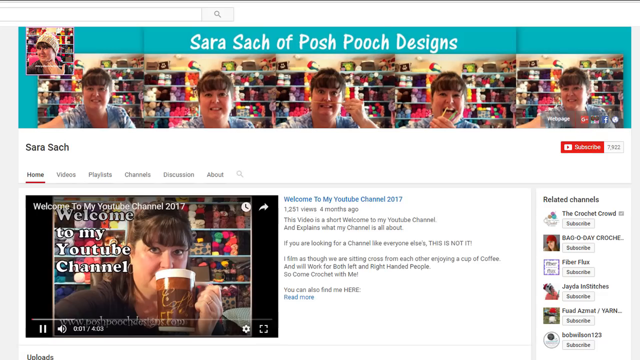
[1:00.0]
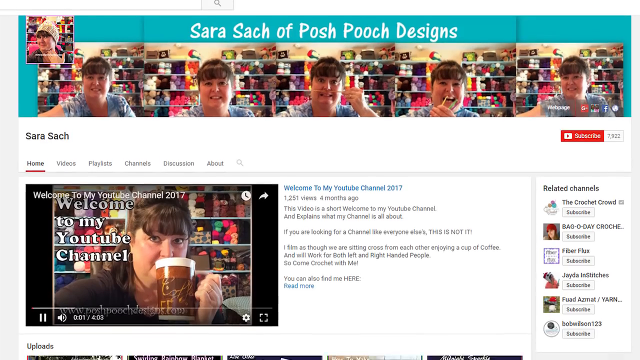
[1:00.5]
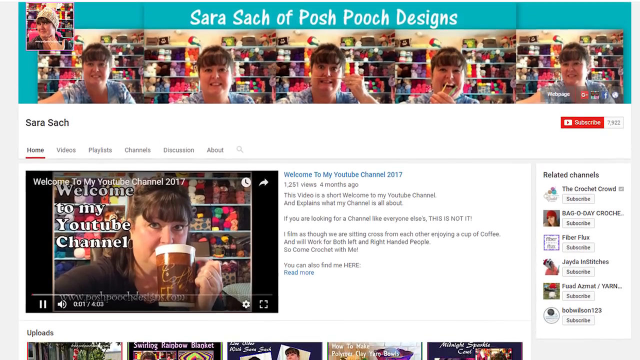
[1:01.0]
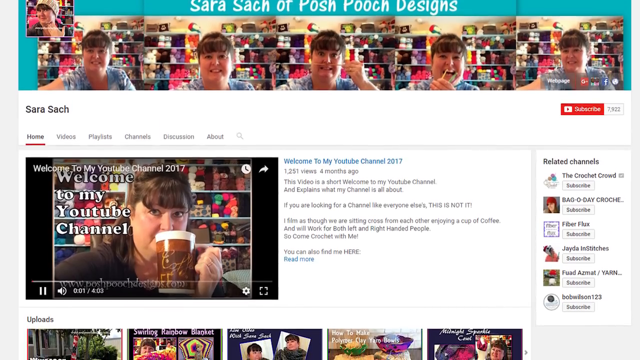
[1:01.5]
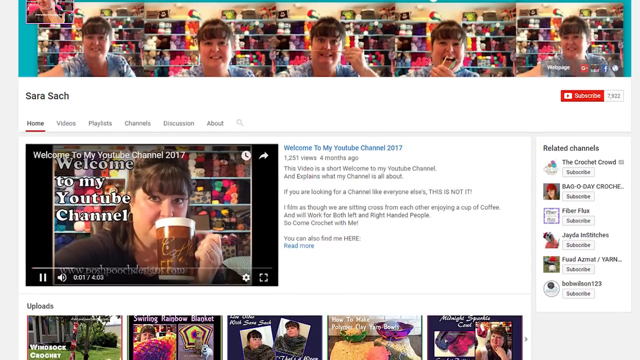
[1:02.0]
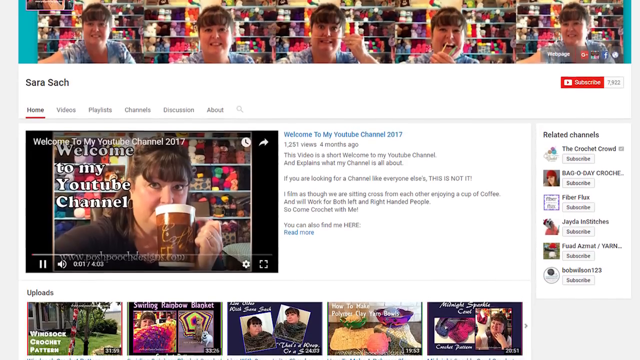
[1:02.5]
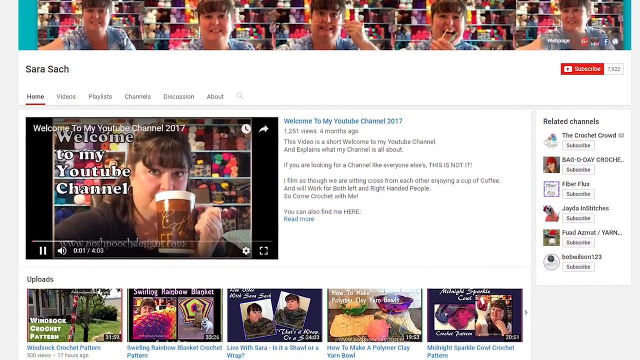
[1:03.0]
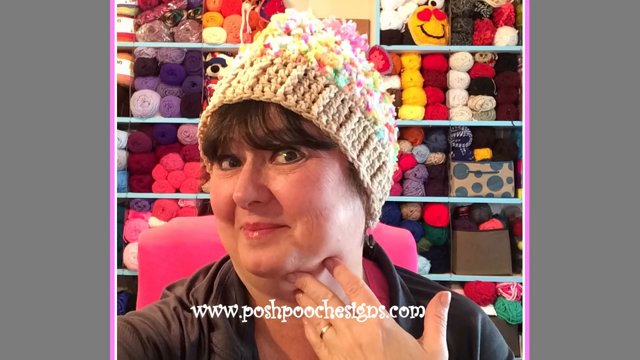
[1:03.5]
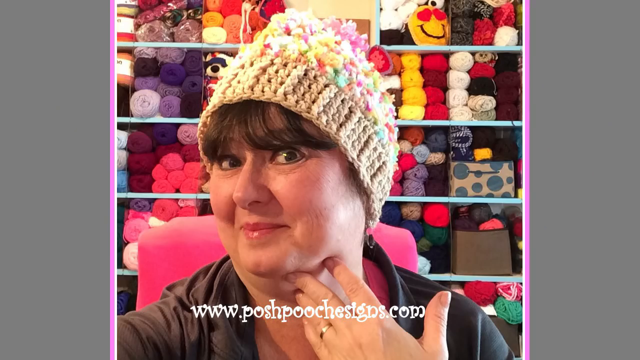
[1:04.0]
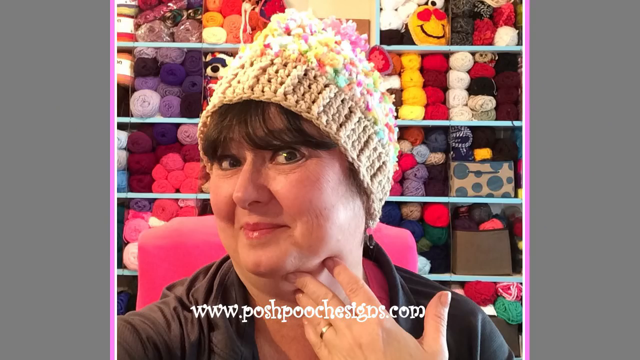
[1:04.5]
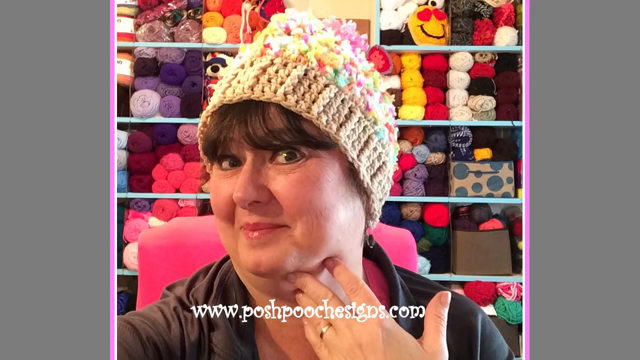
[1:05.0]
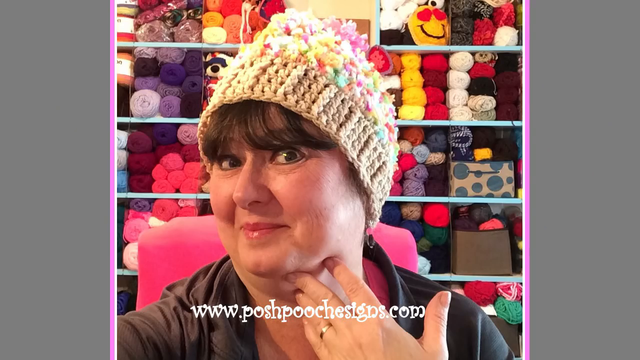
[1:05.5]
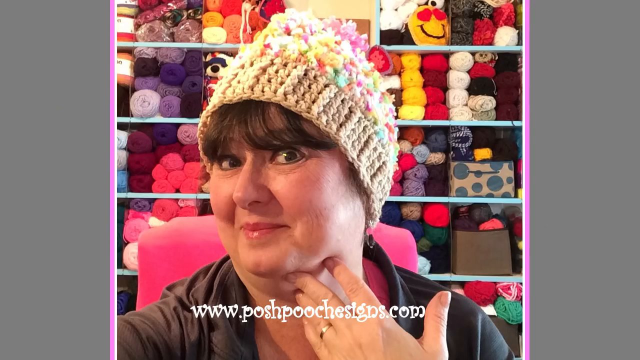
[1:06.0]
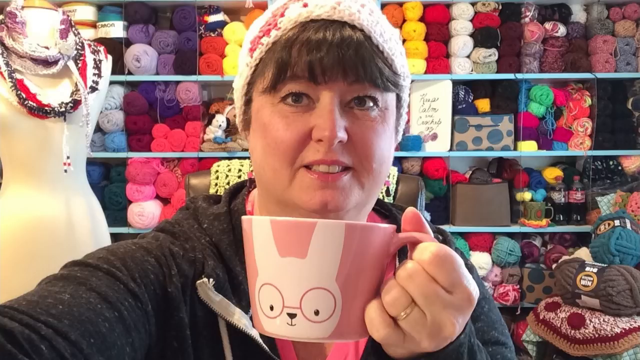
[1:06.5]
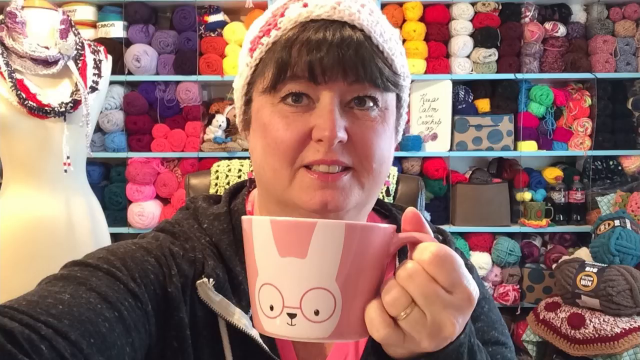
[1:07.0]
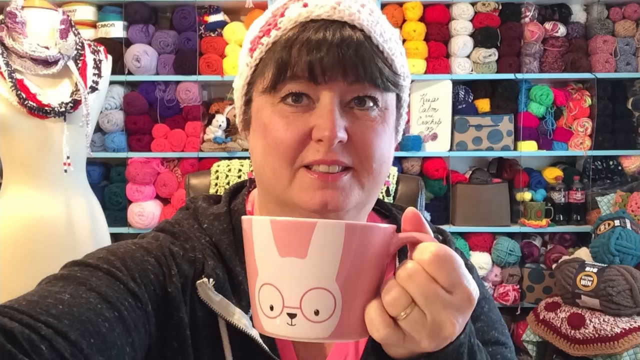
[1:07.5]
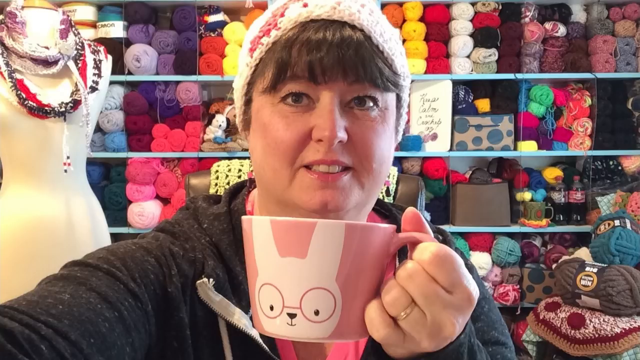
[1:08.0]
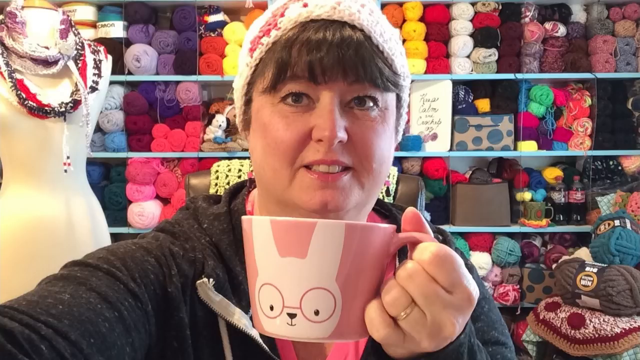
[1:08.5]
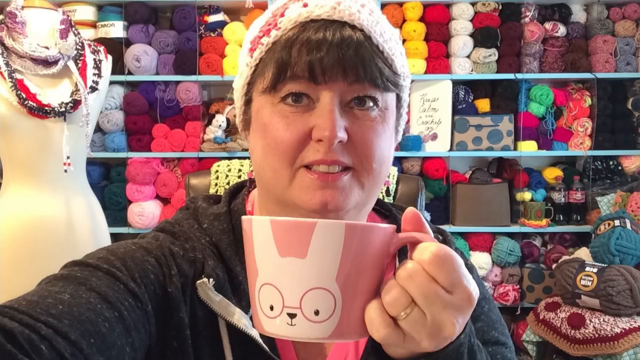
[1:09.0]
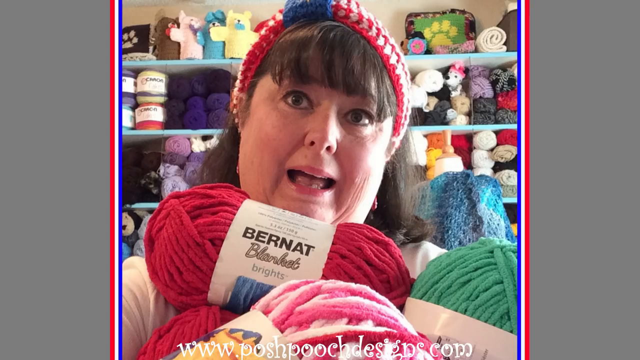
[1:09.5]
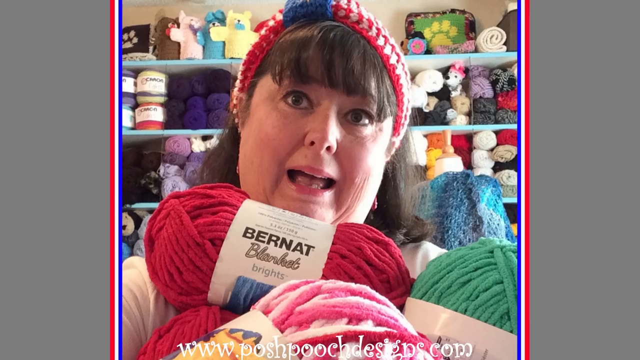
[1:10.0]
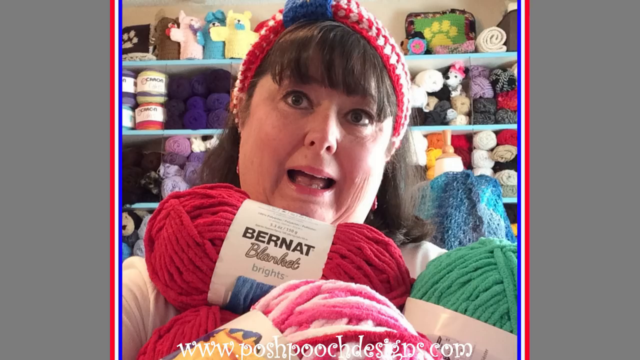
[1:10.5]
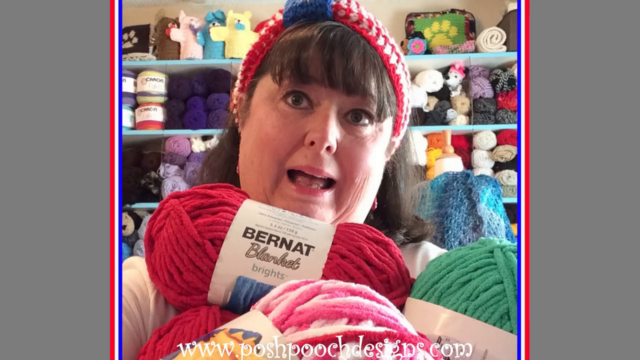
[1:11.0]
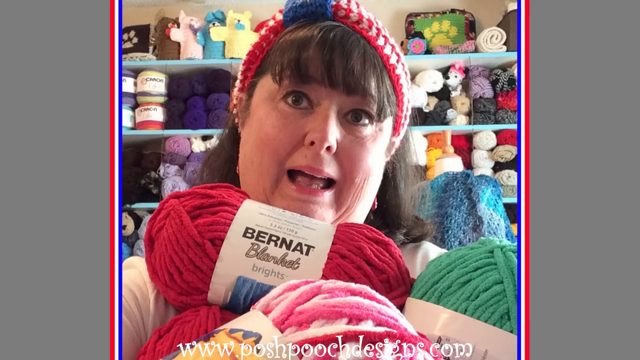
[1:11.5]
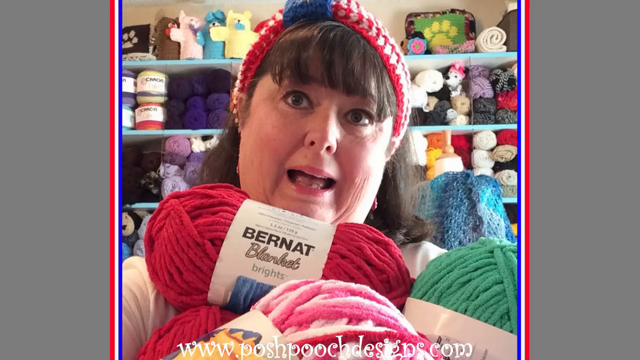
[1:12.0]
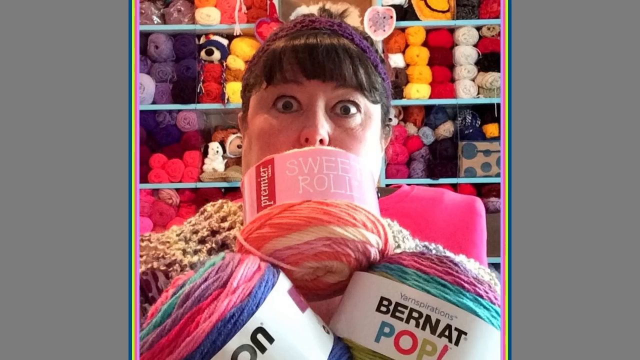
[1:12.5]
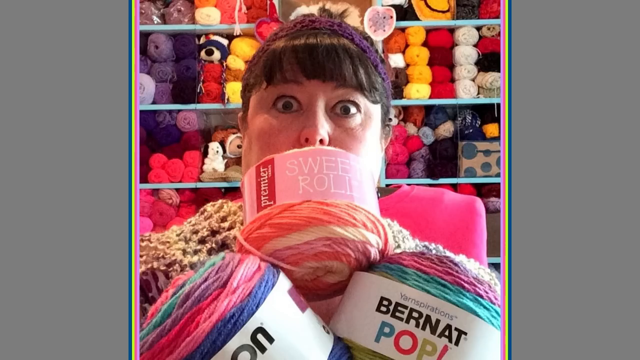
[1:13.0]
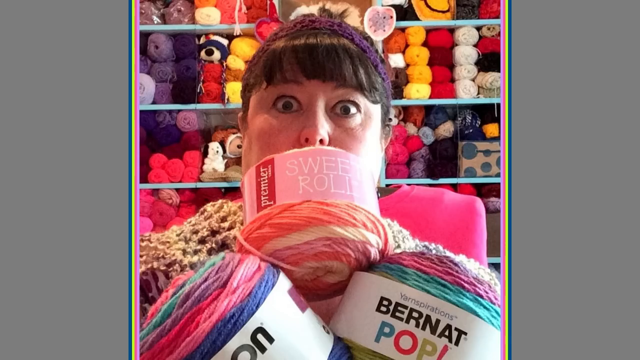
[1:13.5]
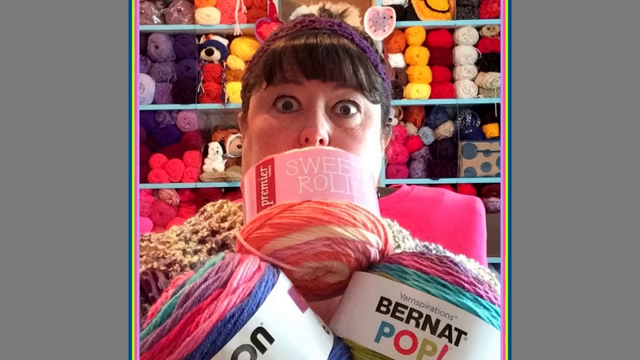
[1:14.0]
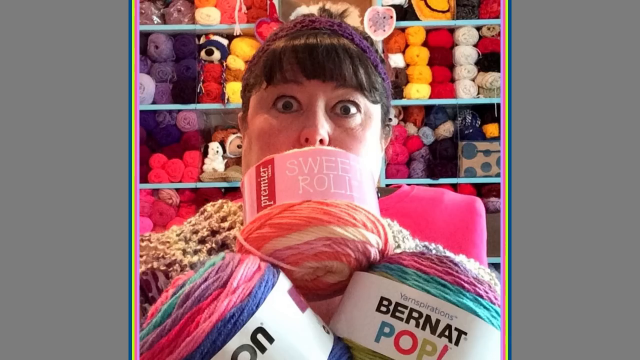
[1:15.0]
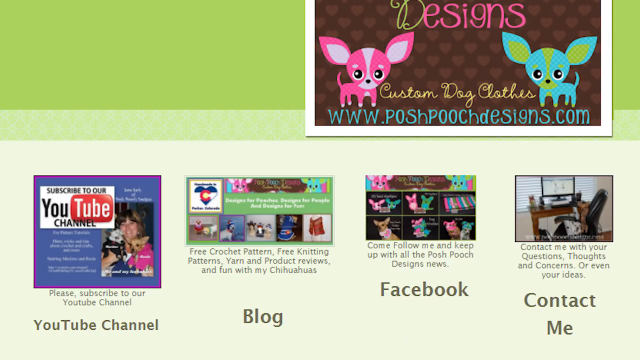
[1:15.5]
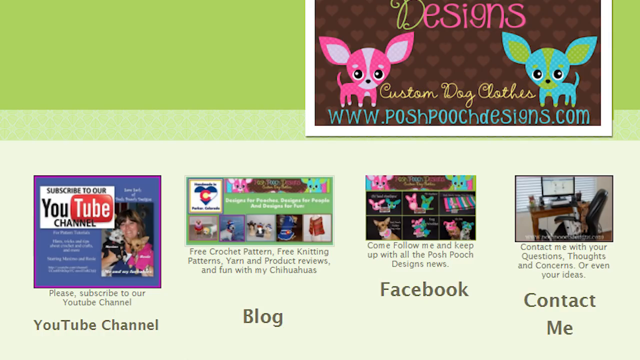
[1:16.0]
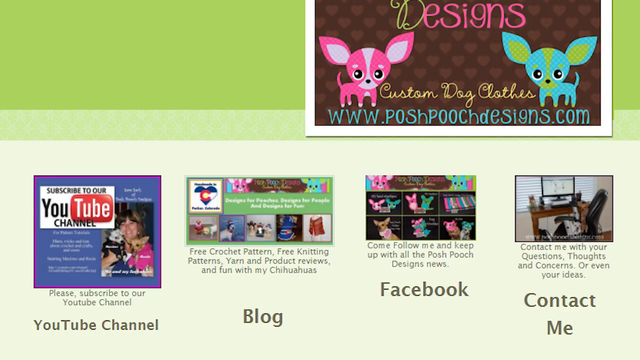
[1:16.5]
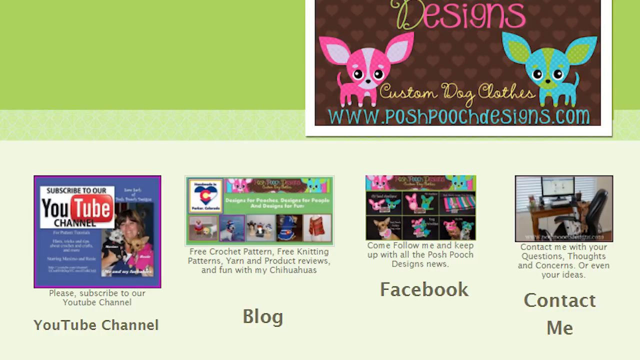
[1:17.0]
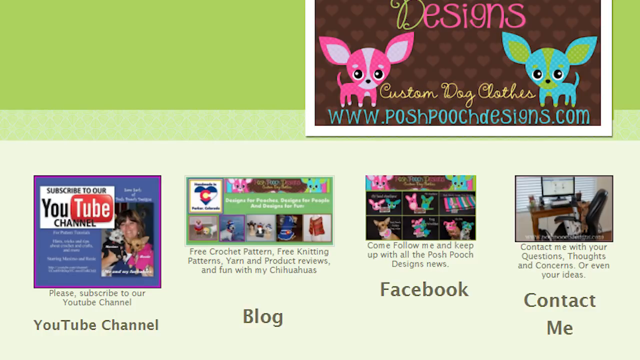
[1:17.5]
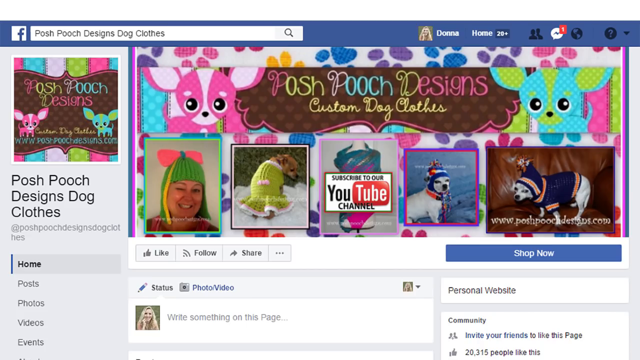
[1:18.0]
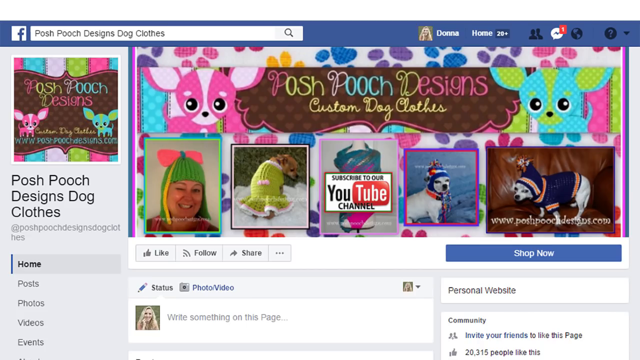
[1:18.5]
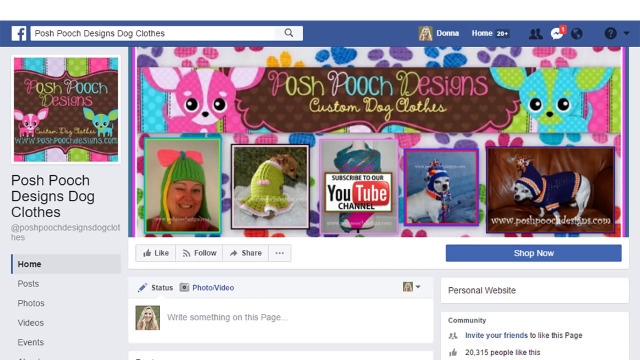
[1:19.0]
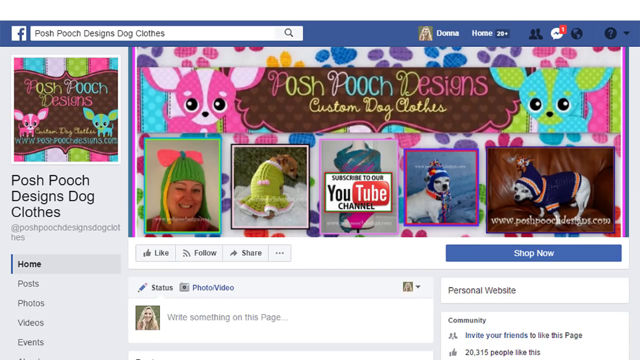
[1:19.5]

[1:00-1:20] The thumbnail of the "Welcome to my YouTube channel 2017" video shows the woman holding a really large brown coffee mug, apparently in her left hand, and looking at the camera. The next photograph is a close-up of her: her hat is made of a kind of fluffy yarn, and behind her are lots of different colours. She appears to have organised some of the yarns in her background by colour in cubby-hole storage, with one cubby hole entirely purple and another entirely reds and pinks. The next image shows her again with a mug in her left hand, this time a smaller one with a pink background and a cartoon rabbit wearing glasses on it. She has a stack of chenille yarn next to her, and on the other side a mannequin wearing what looks like two scarves. In the next photograph the same woman looks slightly off camera and pulls a funny face while holding the chenille yarn in her arms; there are at least four balls of big chunky yarn, which looks like it might be quite hard to hold. The label on the yarn reads "Bernat Blanket Bright"; there are two red balls, one that seems to be pink, and one solid green. The next photograph is also funny: she holds some kind of multi-coloured yarns, with three yarn cakes visible, one saying "Sweet Roll On" and another "Yarnspirations Bernat", and she wears a crocheted headband. The next screen shows what might be her website, with a logo for "poshpoochdesigns.com" in the top right-hand corner and "custom dog clothes" above it. The banner has what appear to be two cartoon chihuahuas, one pink and one blue, and there are links to the YouTube channel, her blog, Facebook, and a contact me button.